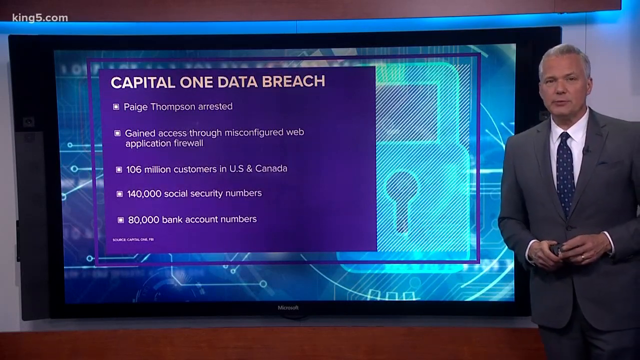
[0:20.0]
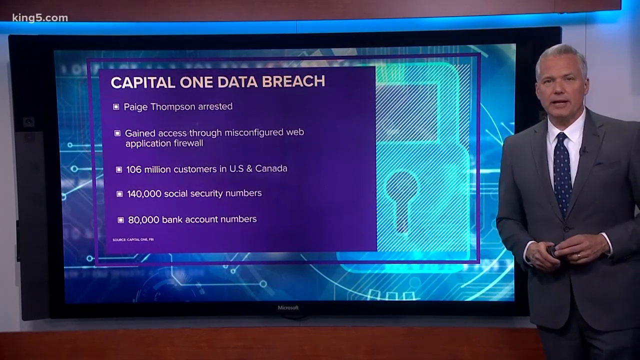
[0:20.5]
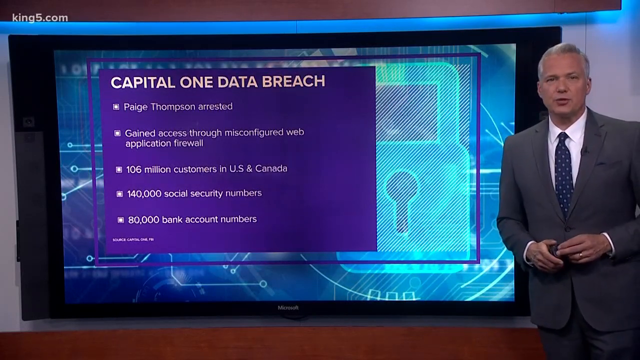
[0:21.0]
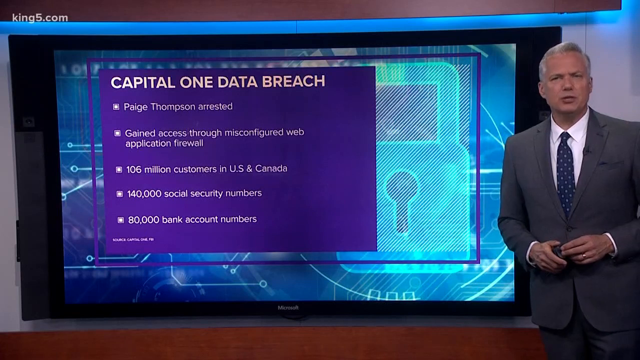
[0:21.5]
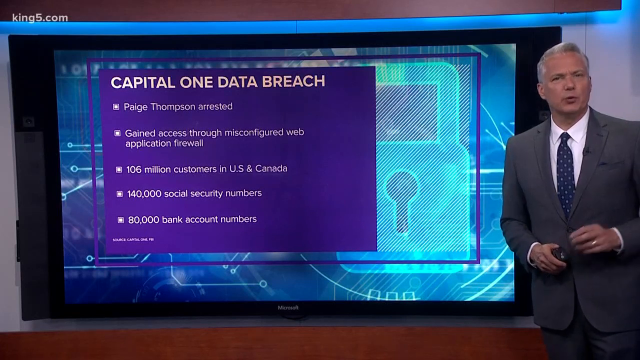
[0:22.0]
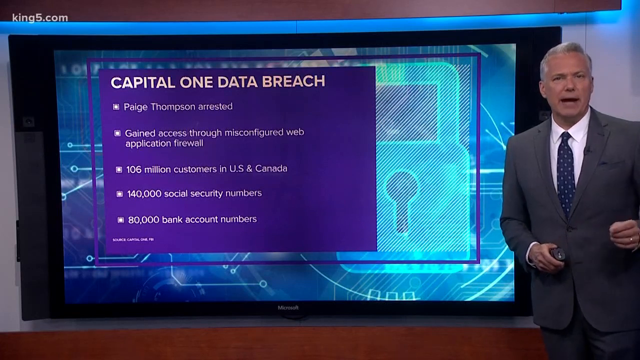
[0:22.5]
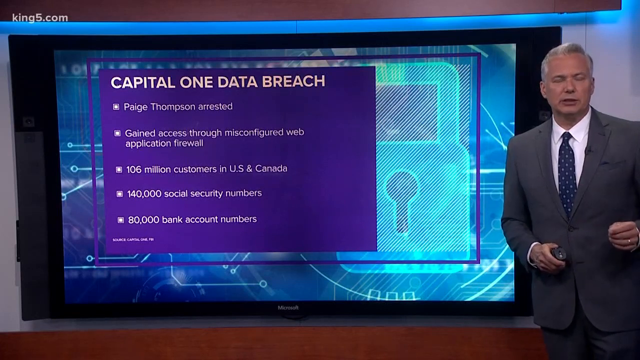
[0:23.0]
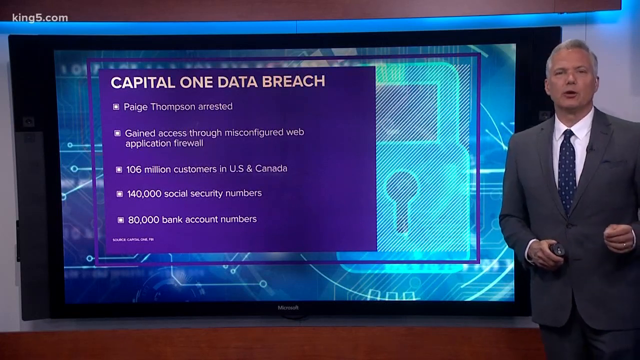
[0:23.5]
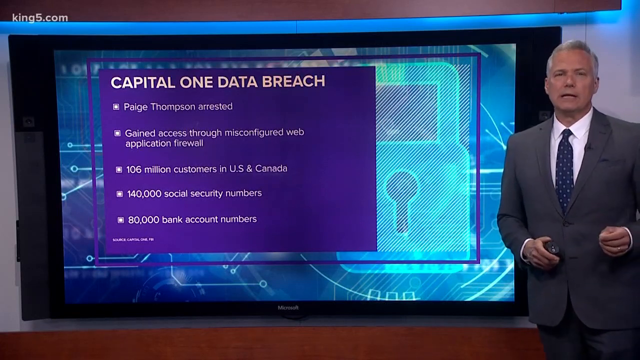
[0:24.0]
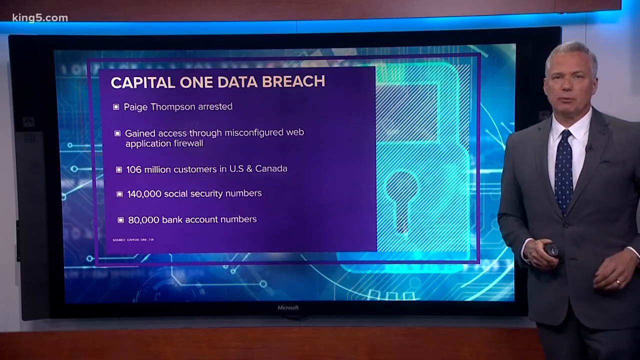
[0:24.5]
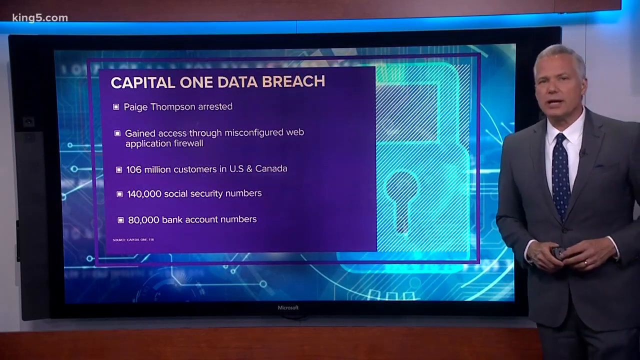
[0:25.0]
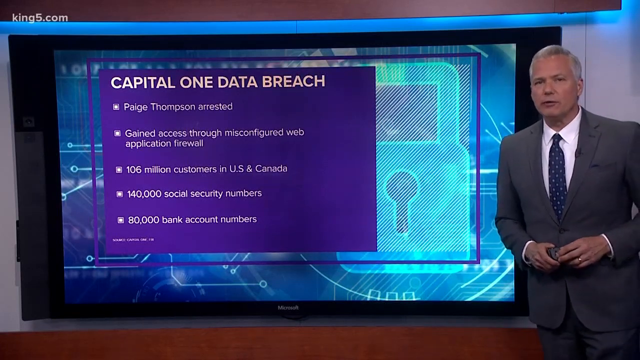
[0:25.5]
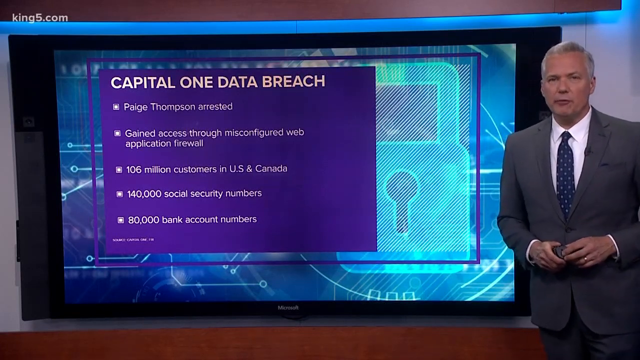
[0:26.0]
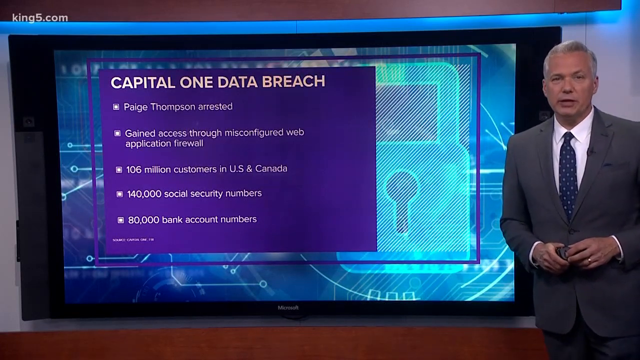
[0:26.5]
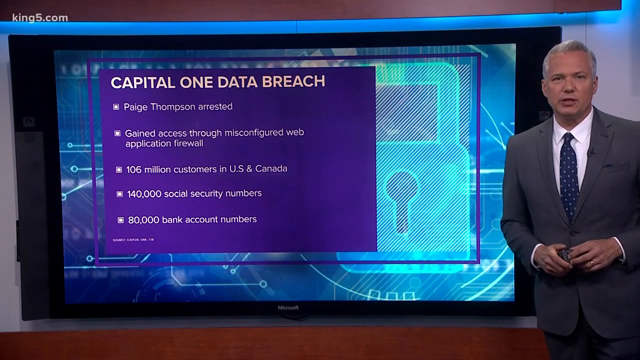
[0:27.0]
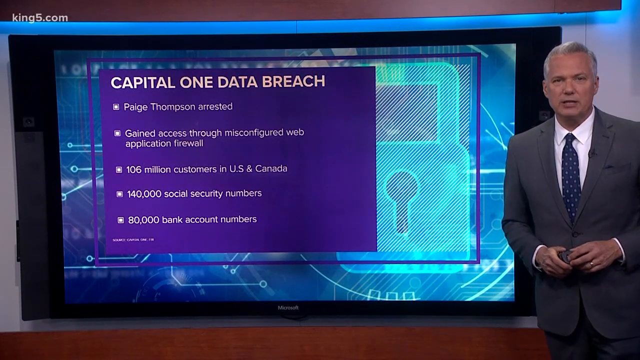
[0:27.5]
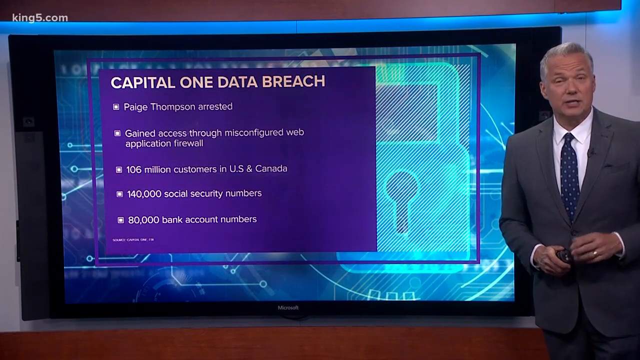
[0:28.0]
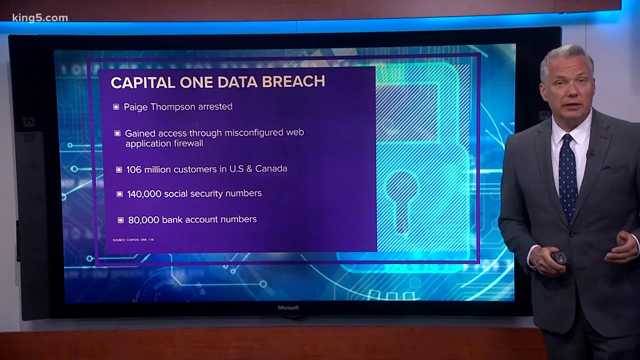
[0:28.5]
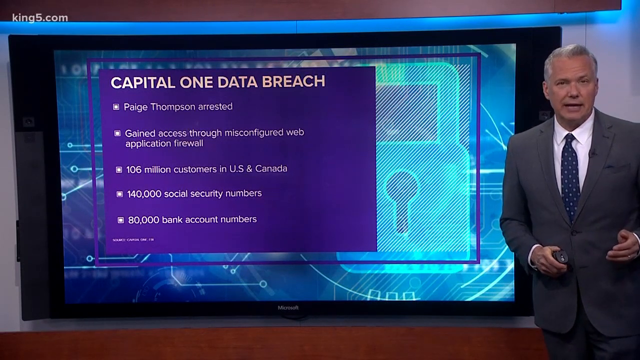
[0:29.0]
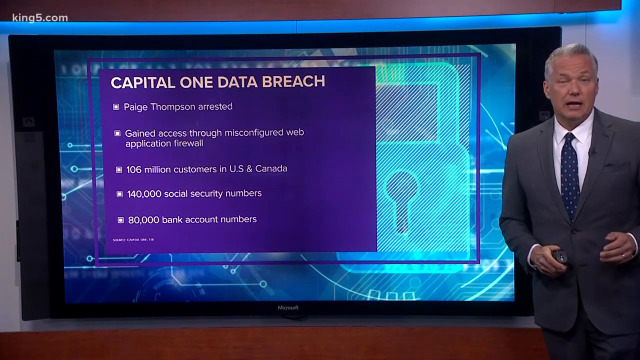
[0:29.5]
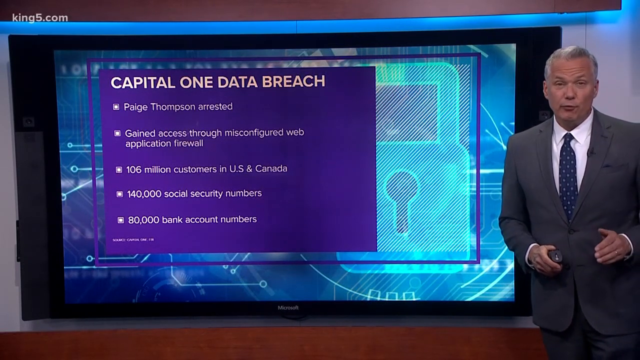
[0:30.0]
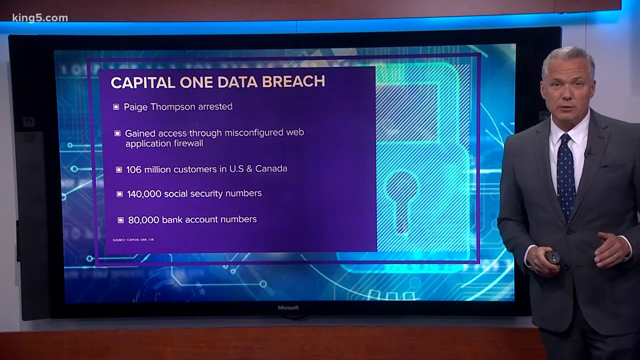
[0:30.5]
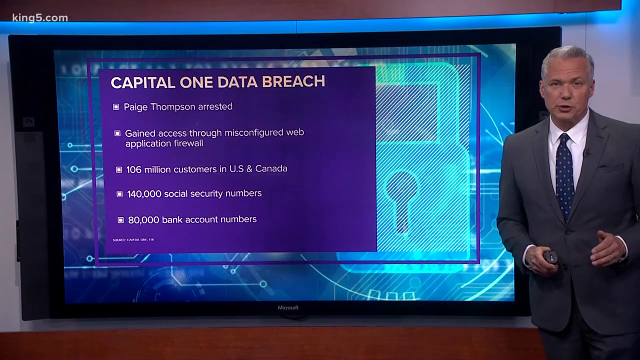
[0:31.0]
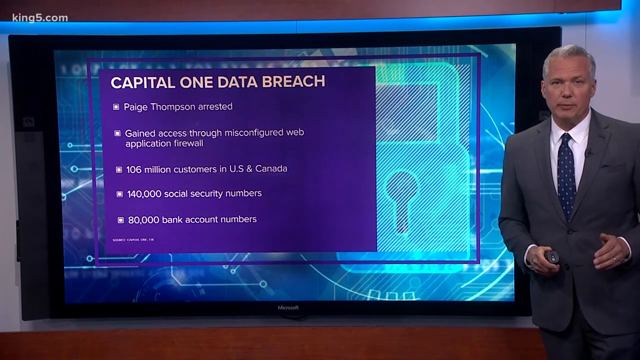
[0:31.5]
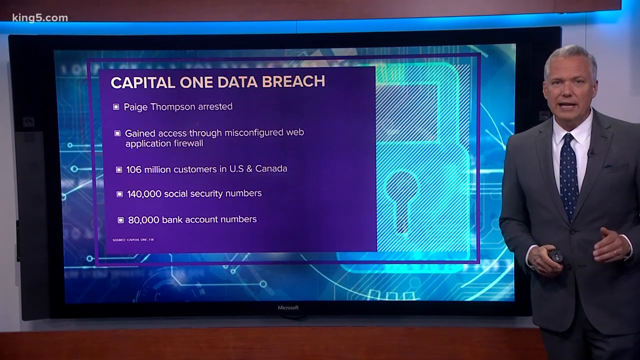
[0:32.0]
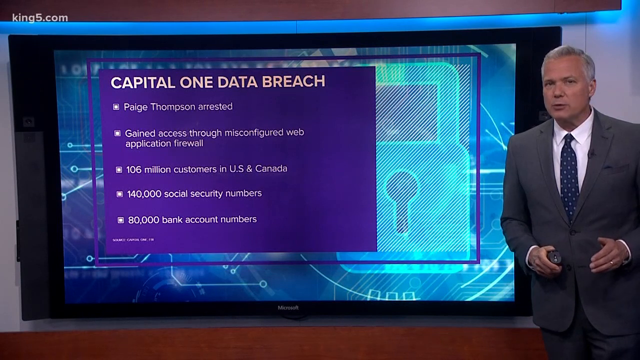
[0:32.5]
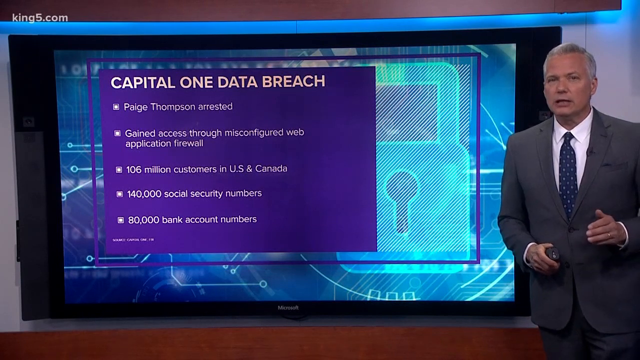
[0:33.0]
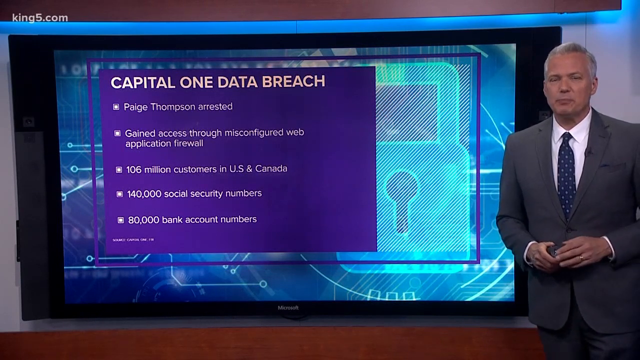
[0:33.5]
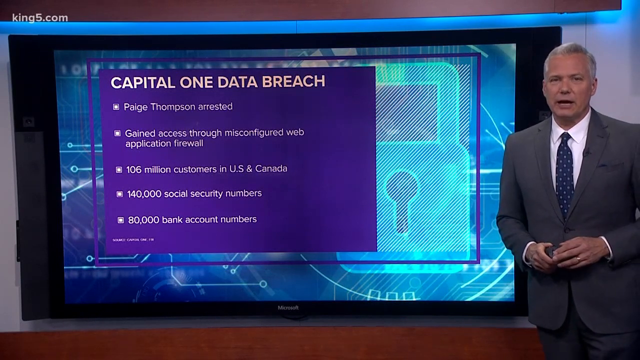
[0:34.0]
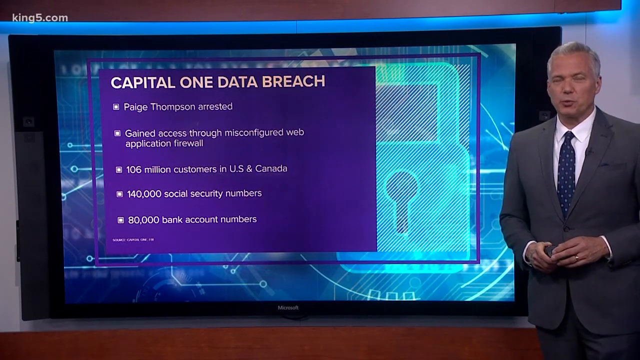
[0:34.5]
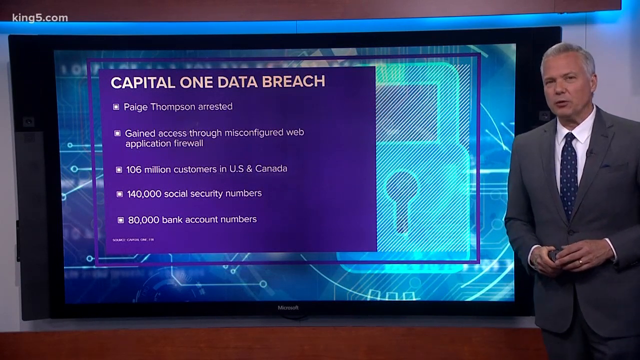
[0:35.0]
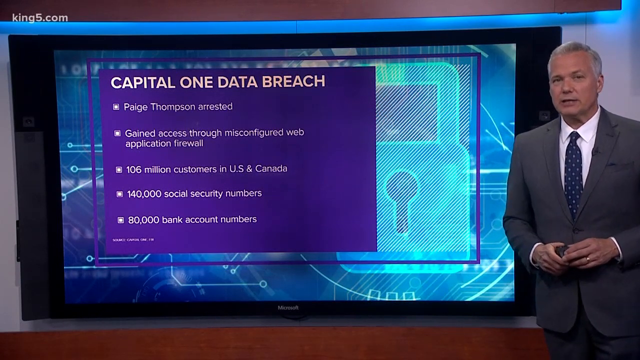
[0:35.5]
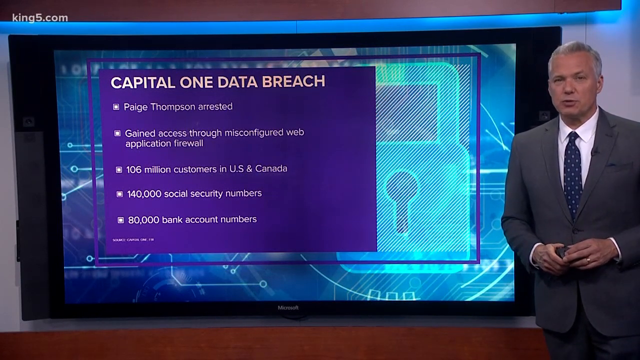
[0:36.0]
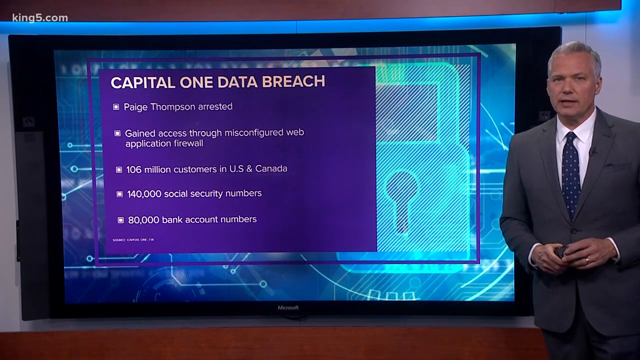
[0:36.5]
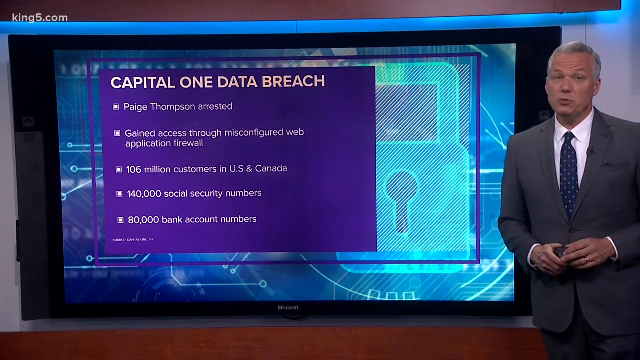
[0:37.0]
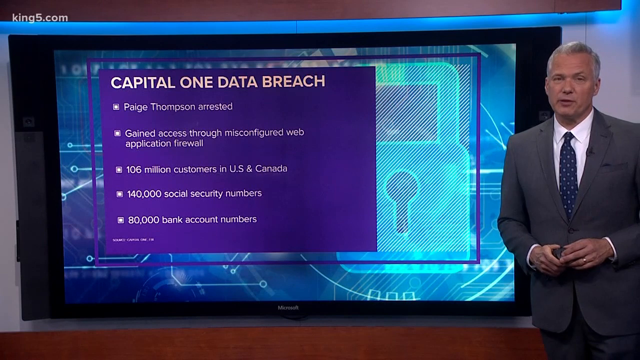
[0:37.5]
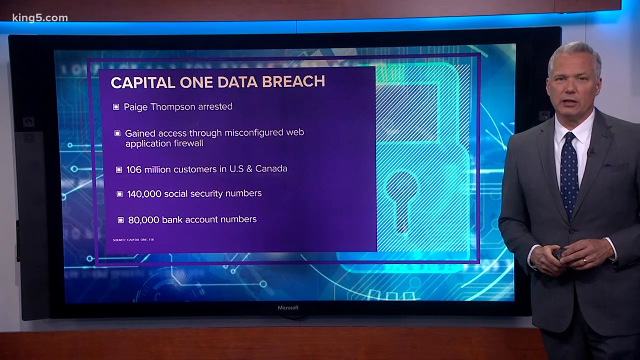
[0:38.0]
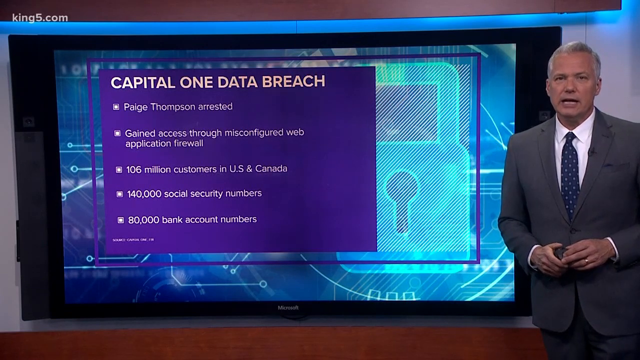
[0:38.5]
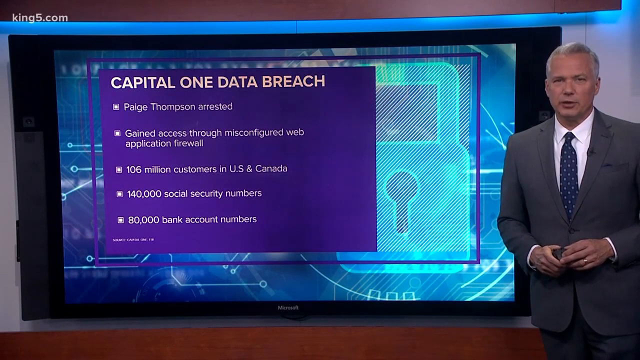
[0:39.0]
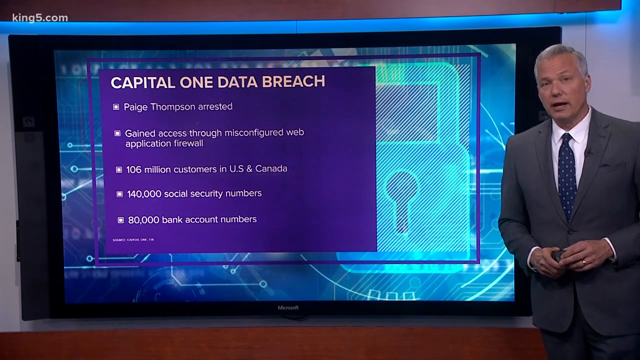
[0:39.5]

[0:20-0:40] On the right of the digital screen's background is a digital image of a lock with a keyhole. A blue square overlay with a dark blue background contains white letters. Its title is "Capital One Data Breach", with bullet points underneath: "Paige Thompson Arrested", "Gained Access Through Misconfigured Web Application Firewall", "106 Million Customers in US and Canada", "140,000 Social Security Numbers" and "80,000 Bank Account Numbers". At the far right of the screen the news anchor is standing: an older middle-aged white man with gray hair, wearing a gray or brown suit, a navy blue polka-dotted tie and a white button-down collared shirt. He wears a gold band on his left ring finger. He holds a device that transitions the digital screens in his right hand and uses his left hand as he speaks.